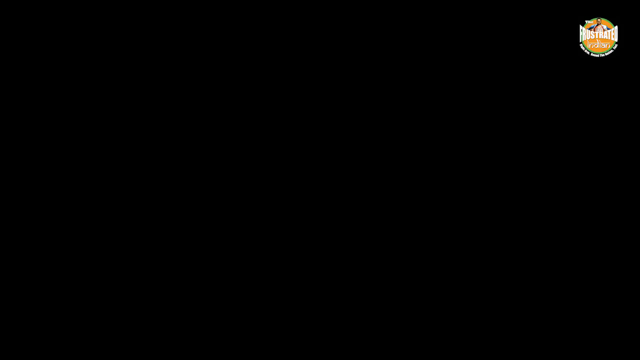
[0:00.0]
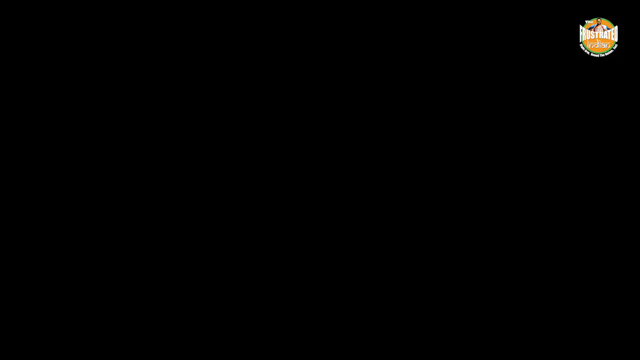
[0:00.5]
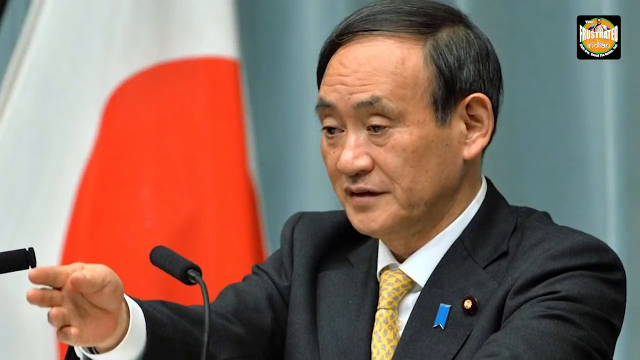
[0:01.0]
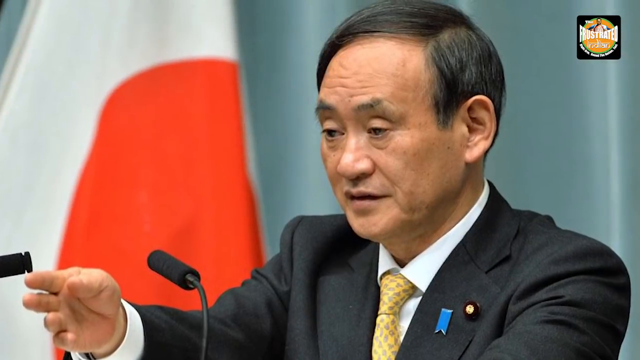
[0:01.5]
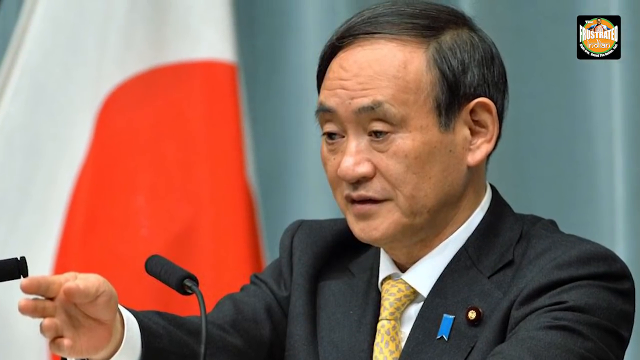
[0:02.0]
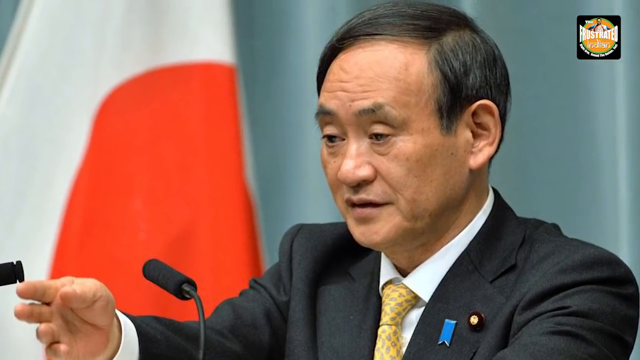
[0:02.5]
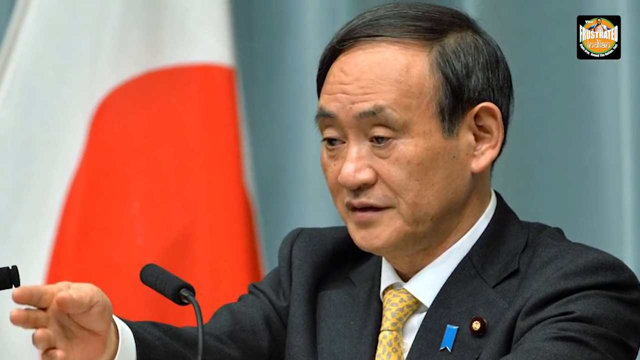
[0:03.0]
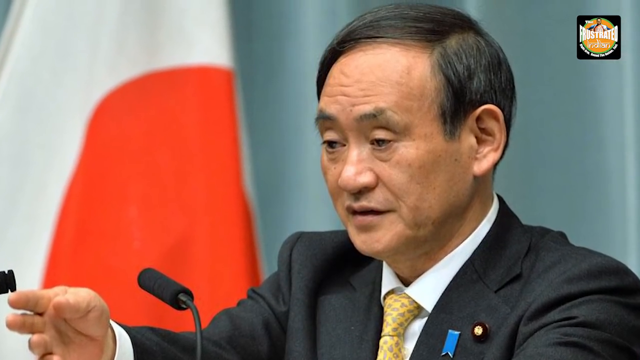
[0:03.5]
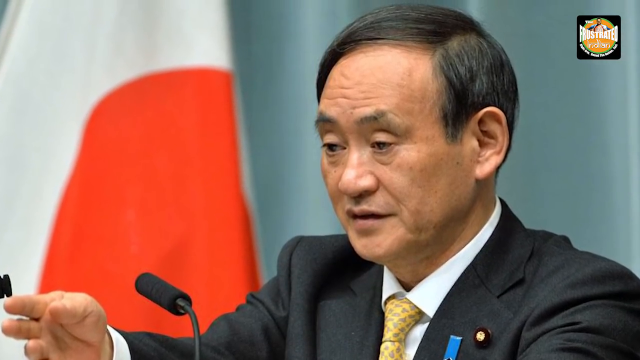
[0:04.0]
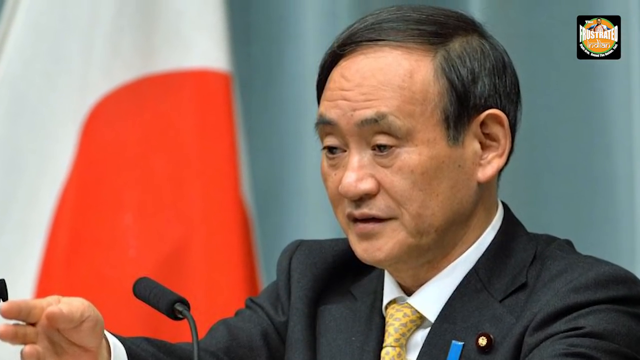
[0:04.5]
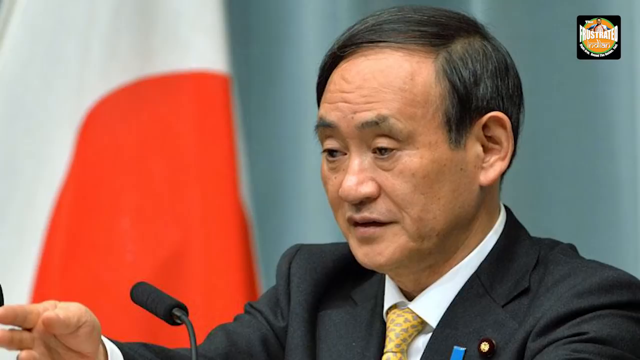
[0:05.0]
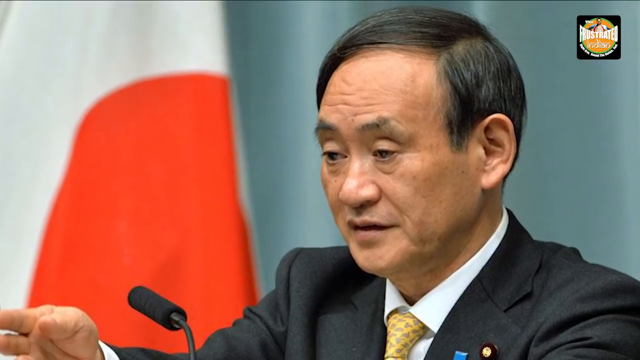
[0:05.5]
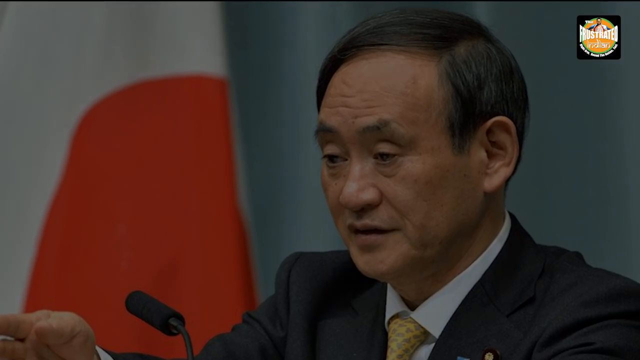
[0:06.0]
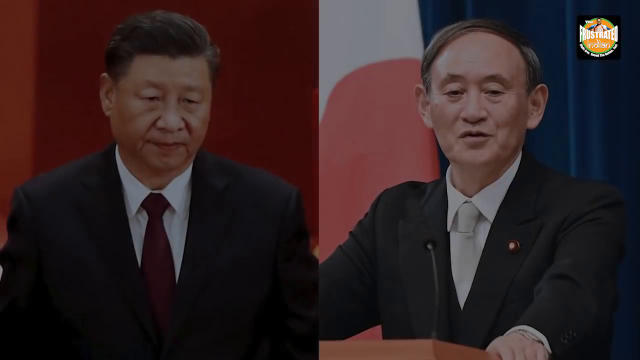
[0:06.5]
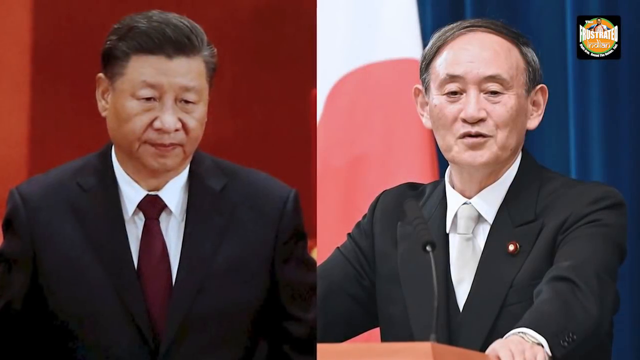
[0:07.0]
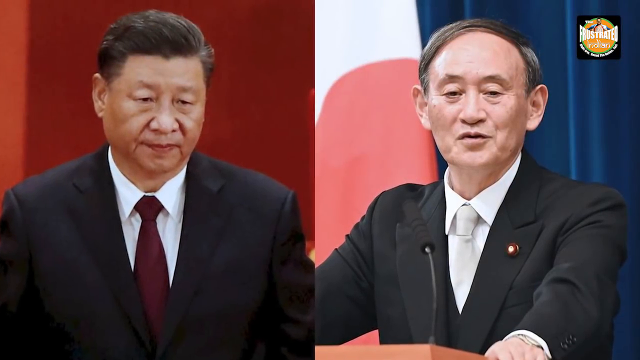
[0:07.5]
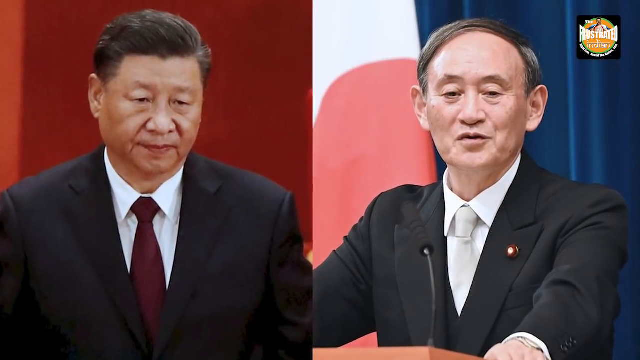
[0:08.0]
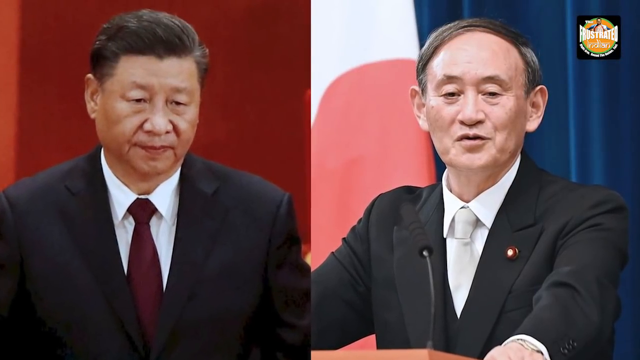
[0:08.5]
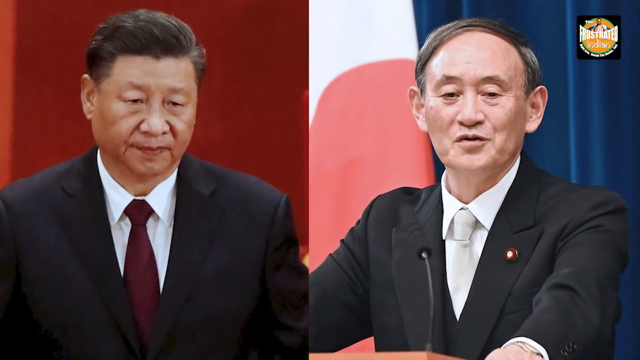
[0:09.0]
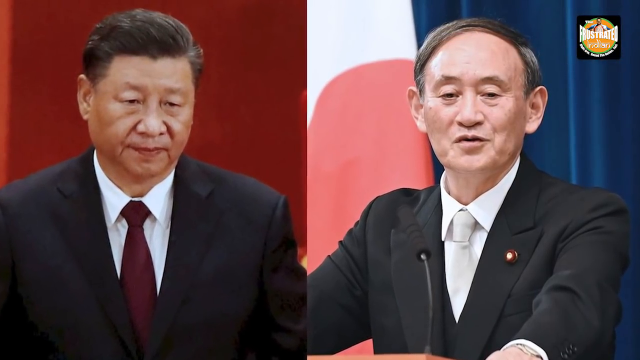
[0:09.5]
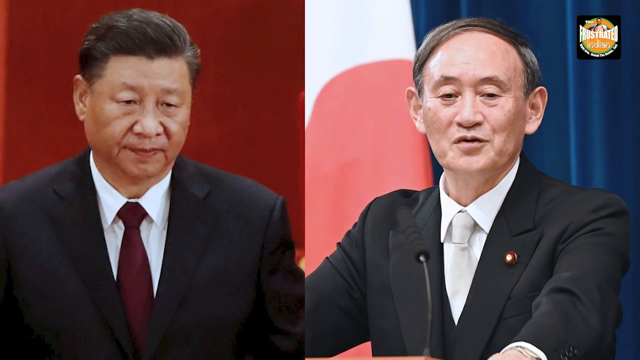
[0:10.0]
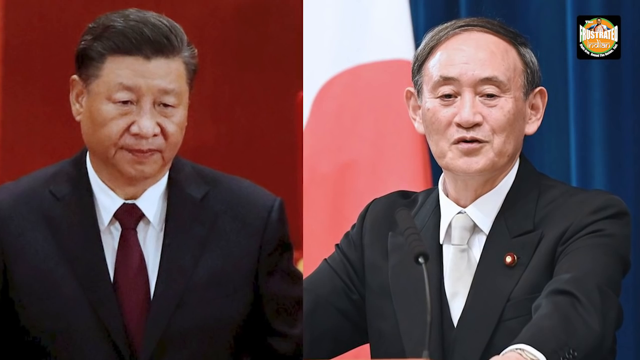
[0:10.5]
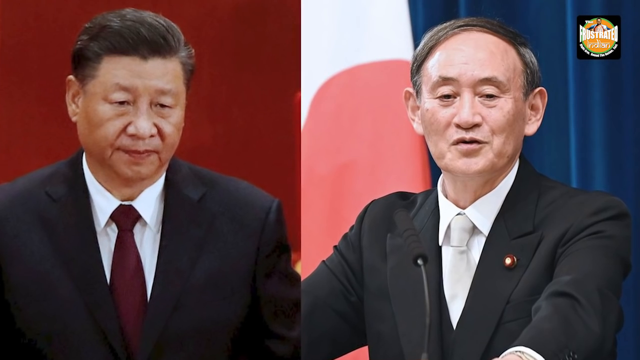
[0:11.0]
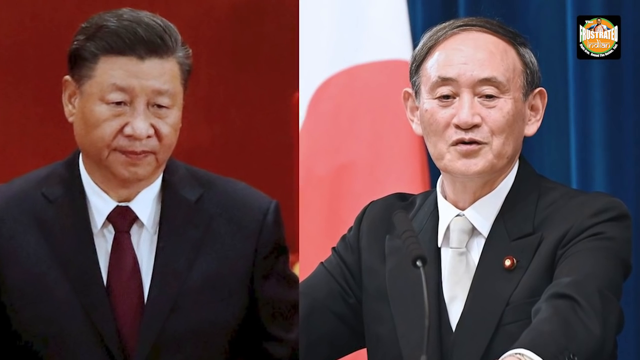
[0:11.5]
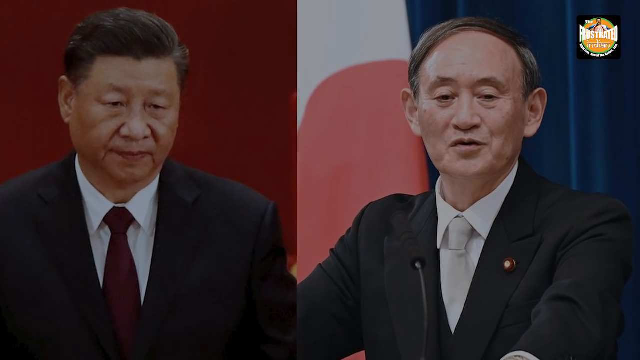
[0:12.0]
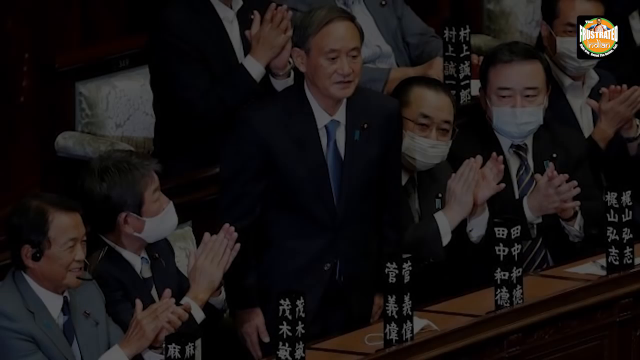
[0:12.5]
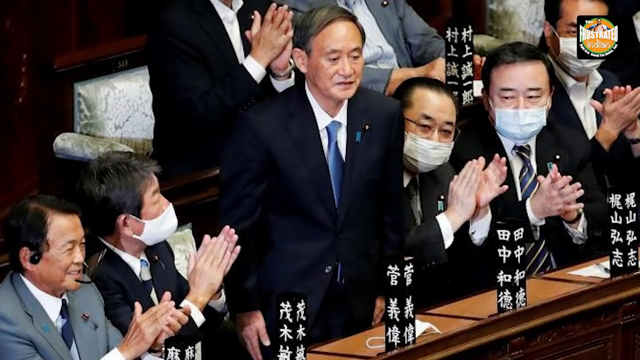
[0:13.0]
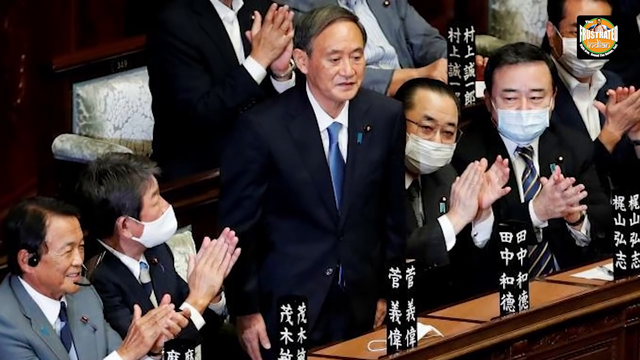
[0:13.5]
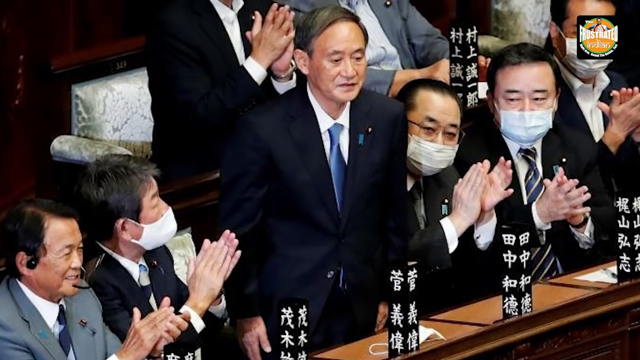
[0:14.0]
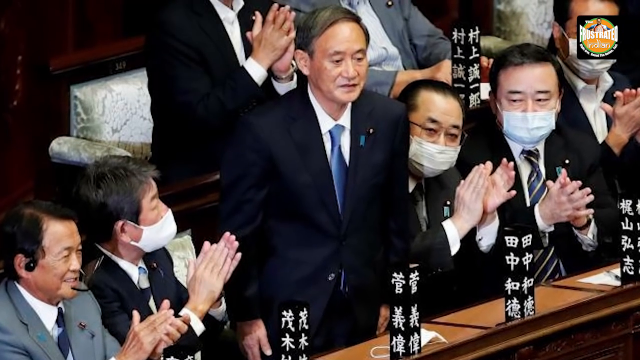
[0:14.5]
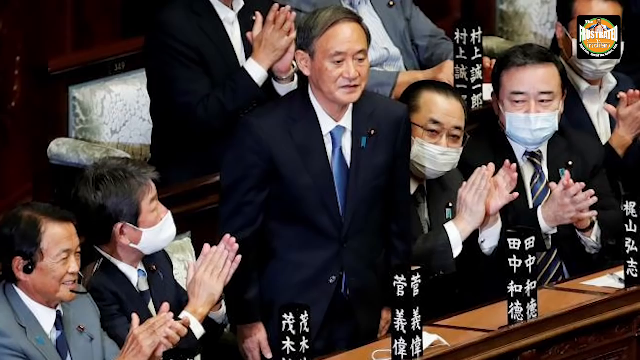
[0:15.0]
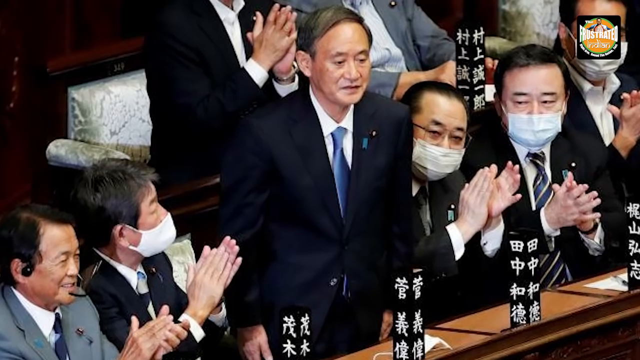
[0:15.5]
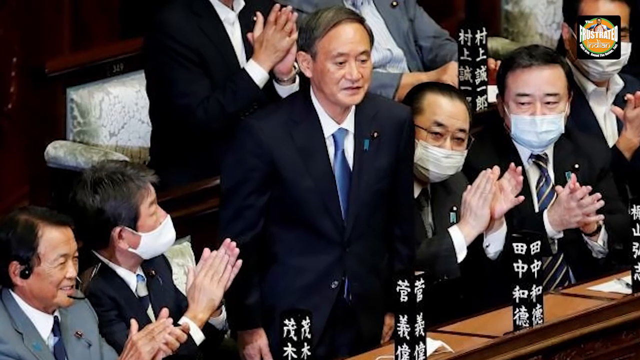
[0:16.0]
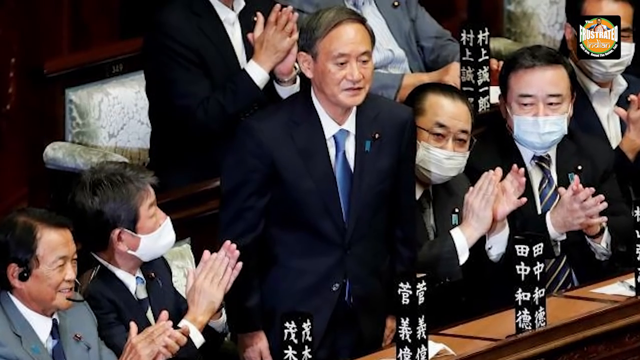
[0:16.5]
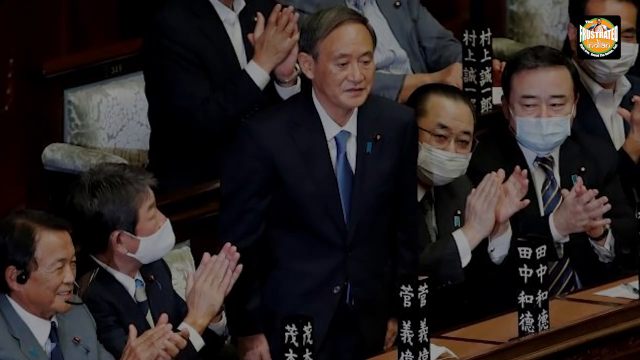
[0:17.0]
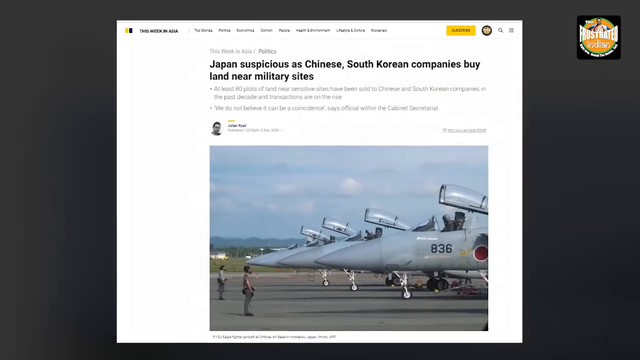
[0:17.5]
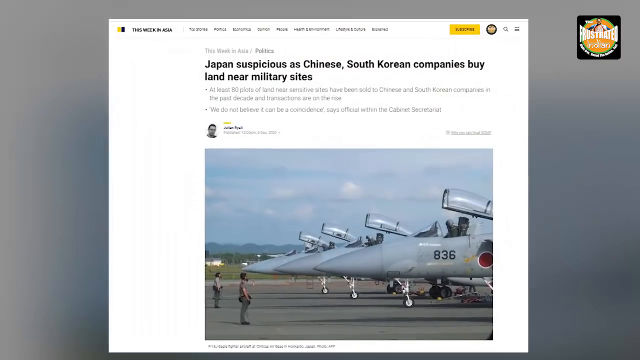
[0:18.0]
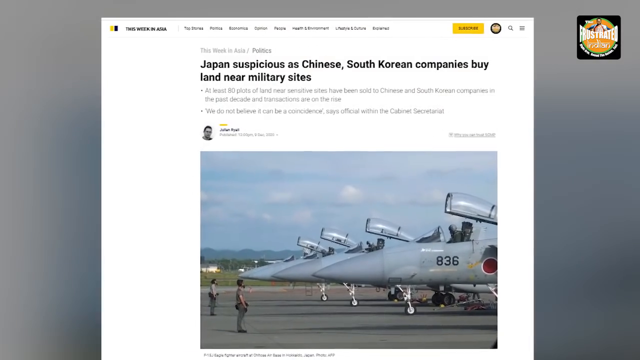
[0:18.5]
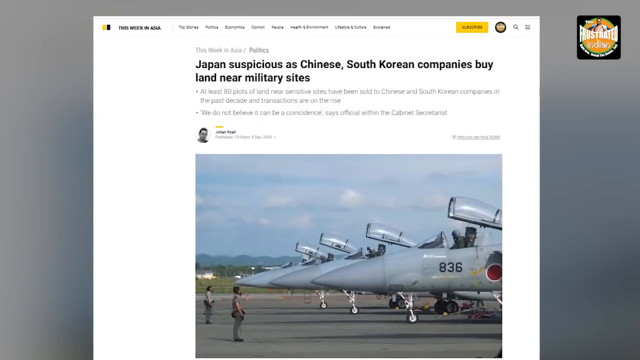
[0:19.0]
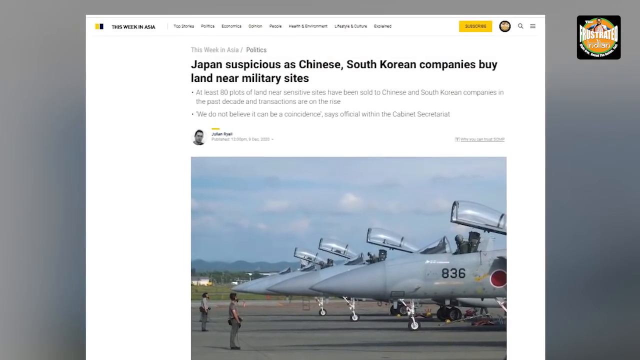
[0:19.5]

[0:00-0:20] The video begins with a photo of an Asian man wearing a black jacket, a white shirt and a yellow tie. He is in front of a microphone, and the background seems to be white, red and green. His appearance is rather neat. Next, two photos are shown side by side, each taking up an equal part of the frame. On the left, a man wears a dark jacket, a light shirt and a burgundy tie; on the right, a man wears a black jacket, a white shirt and a rather light-colored tie. The background of the left photo is red, while the right one is red, white and blue. Another image follows, in which a man in elegant clothes is standing in the center of the frame, with several people in surgical masks next to him who seem to be applauding.